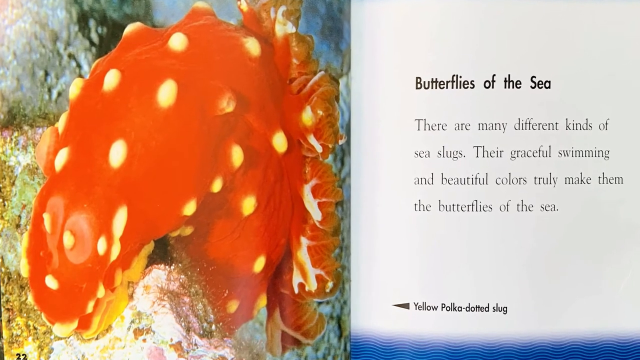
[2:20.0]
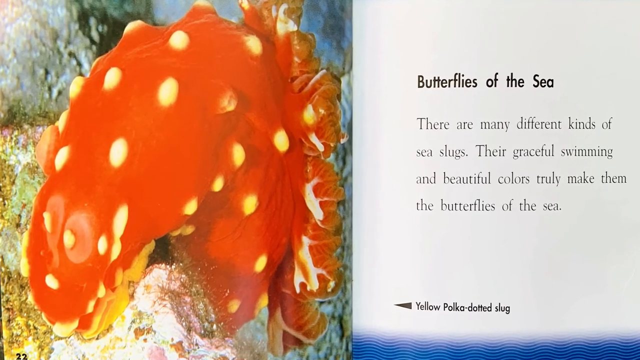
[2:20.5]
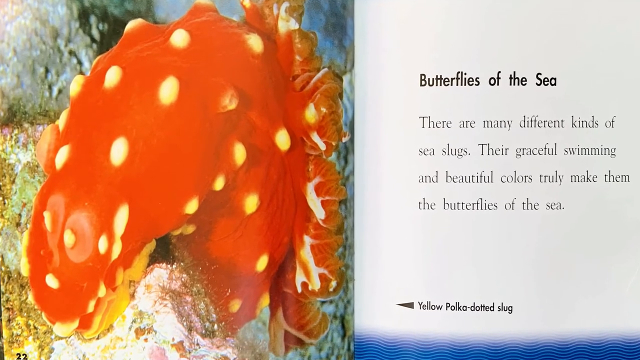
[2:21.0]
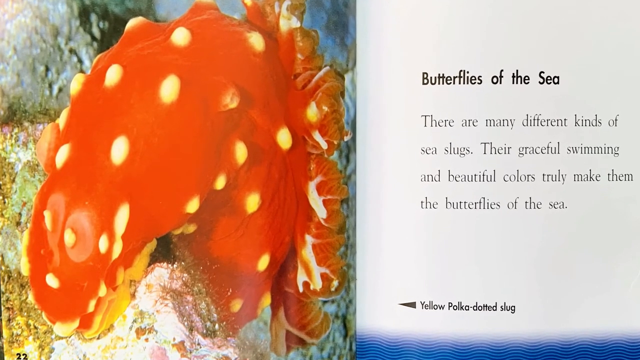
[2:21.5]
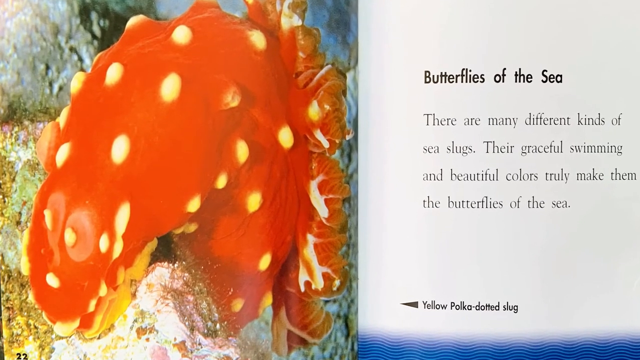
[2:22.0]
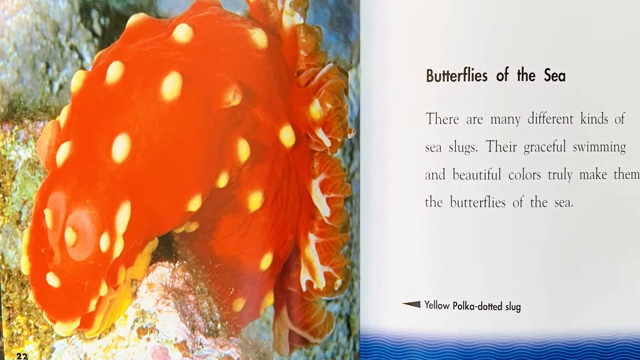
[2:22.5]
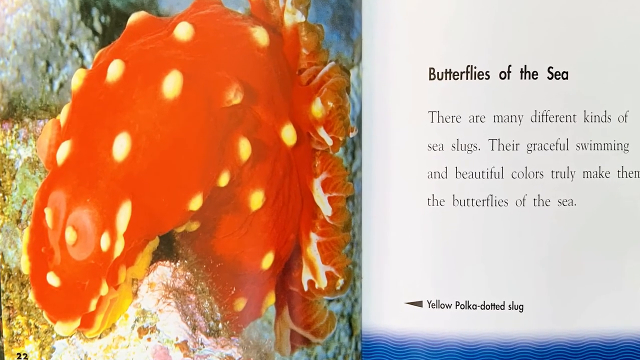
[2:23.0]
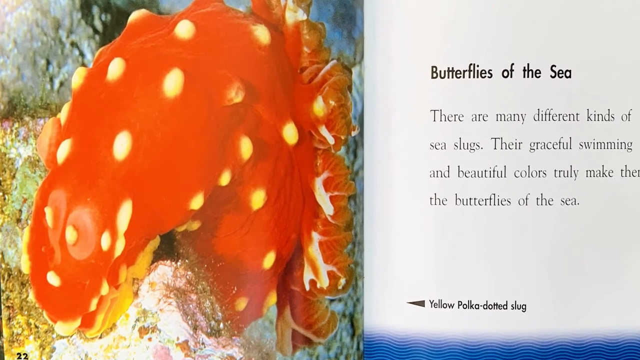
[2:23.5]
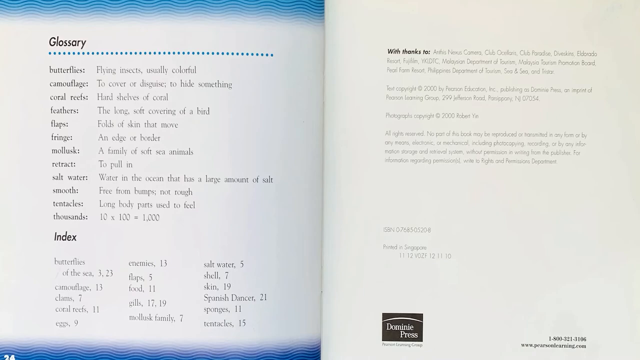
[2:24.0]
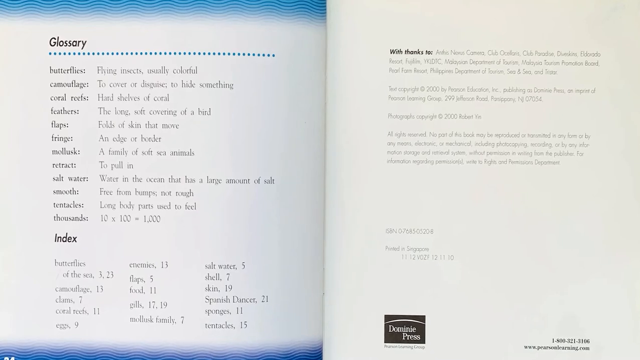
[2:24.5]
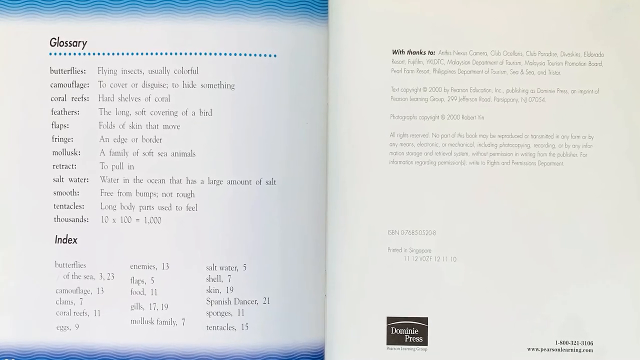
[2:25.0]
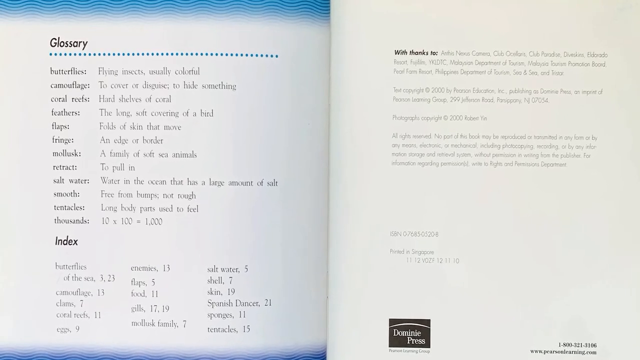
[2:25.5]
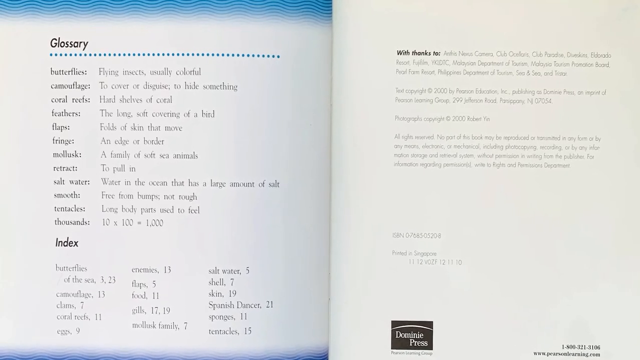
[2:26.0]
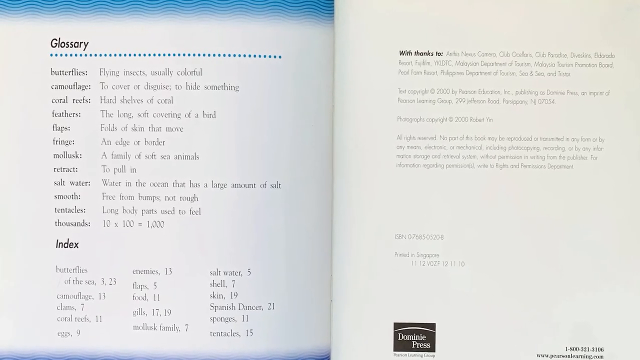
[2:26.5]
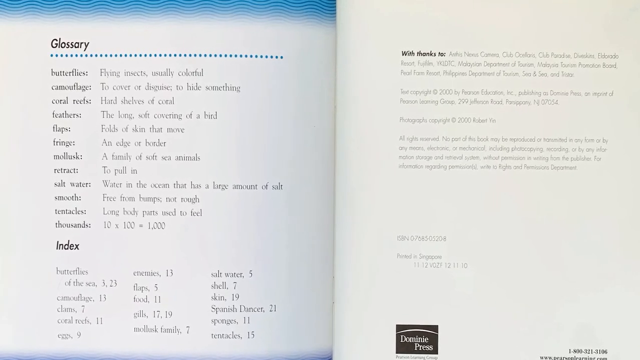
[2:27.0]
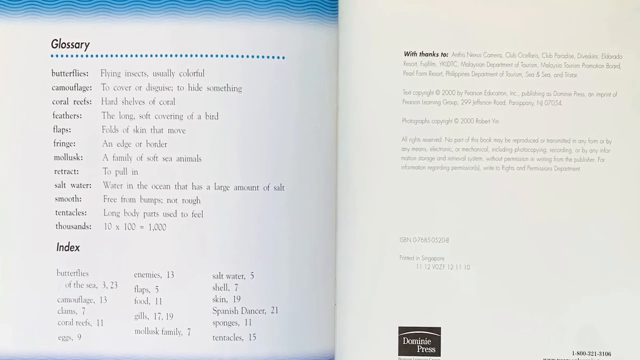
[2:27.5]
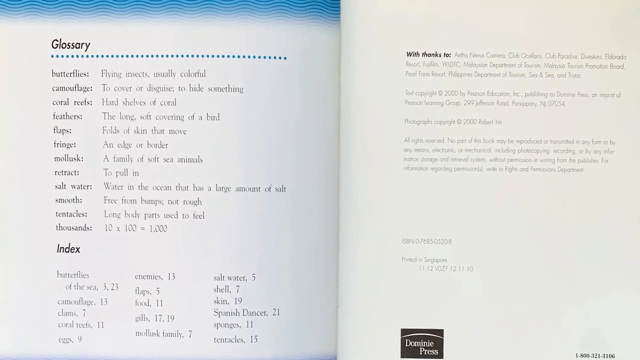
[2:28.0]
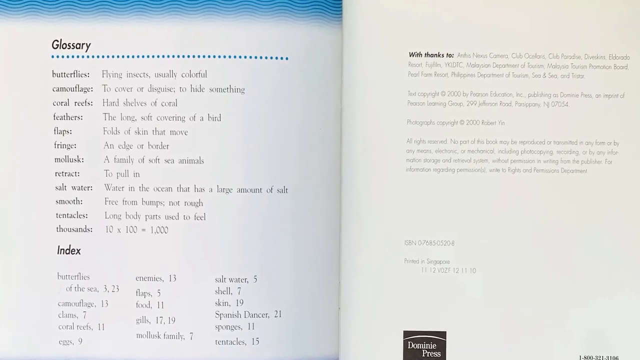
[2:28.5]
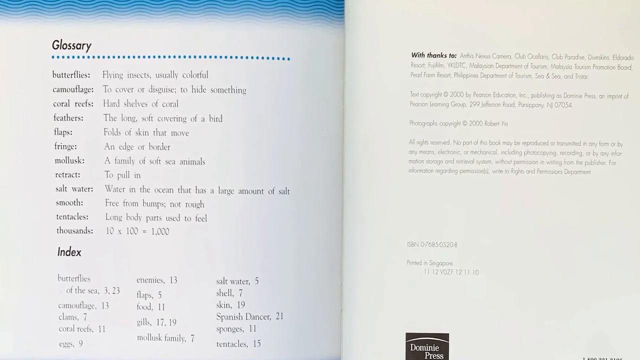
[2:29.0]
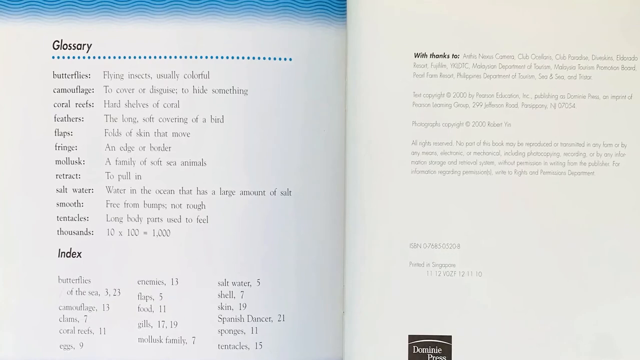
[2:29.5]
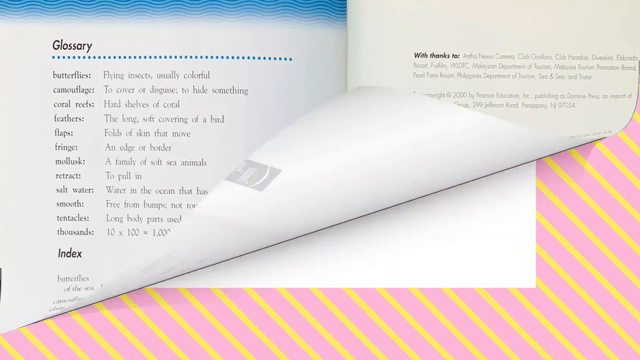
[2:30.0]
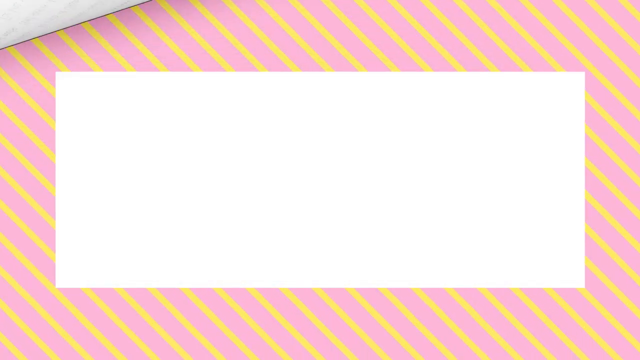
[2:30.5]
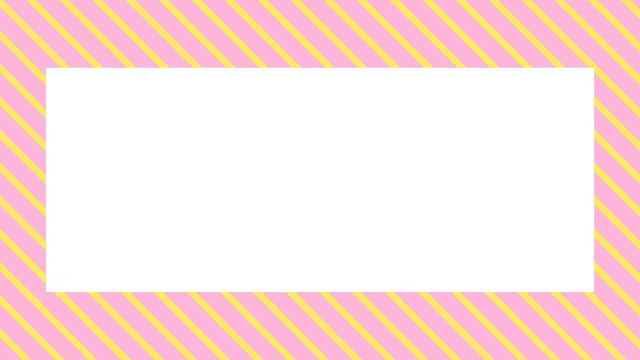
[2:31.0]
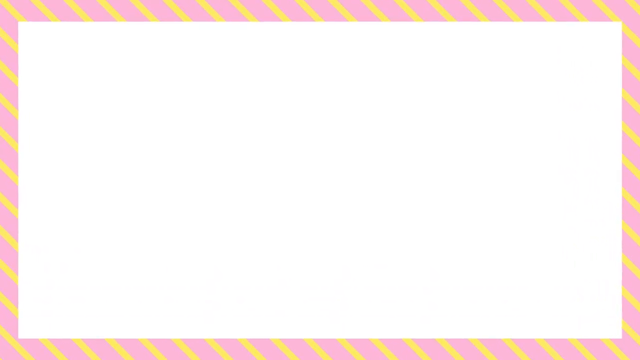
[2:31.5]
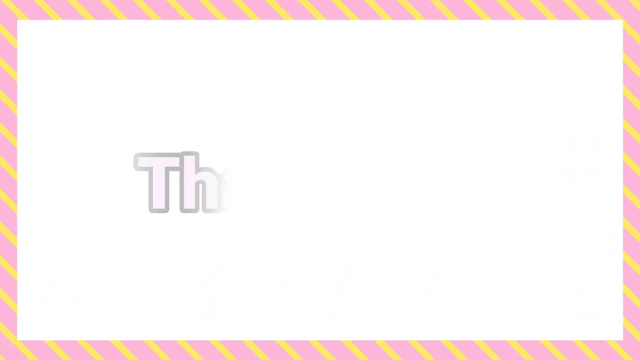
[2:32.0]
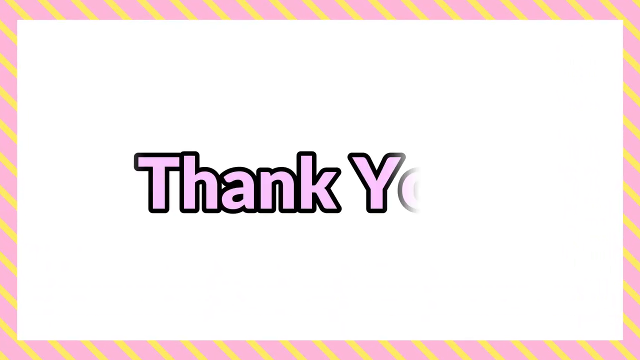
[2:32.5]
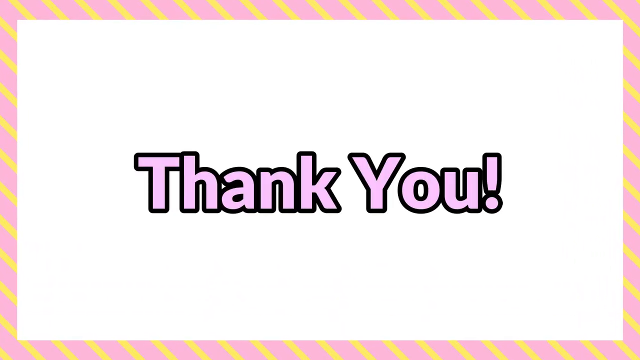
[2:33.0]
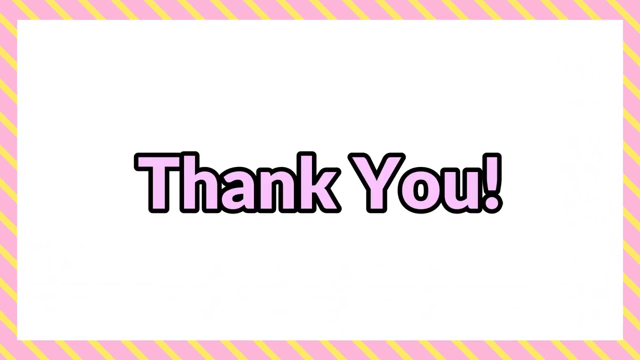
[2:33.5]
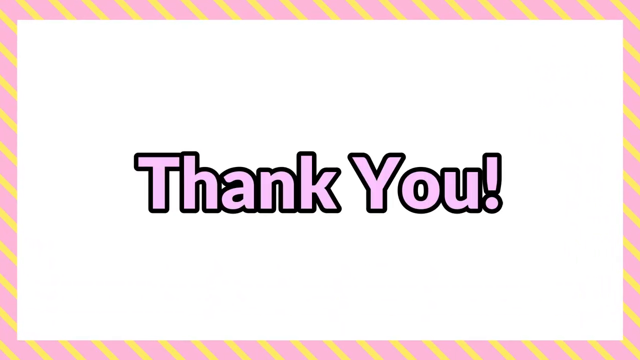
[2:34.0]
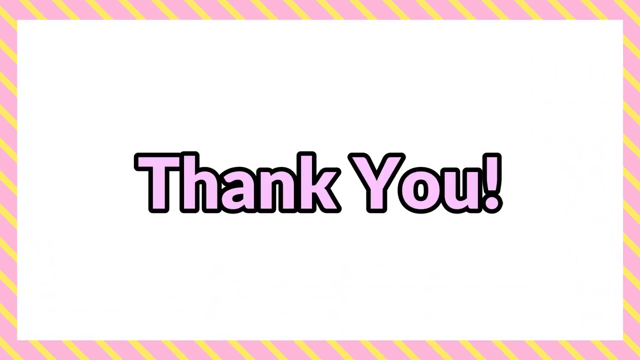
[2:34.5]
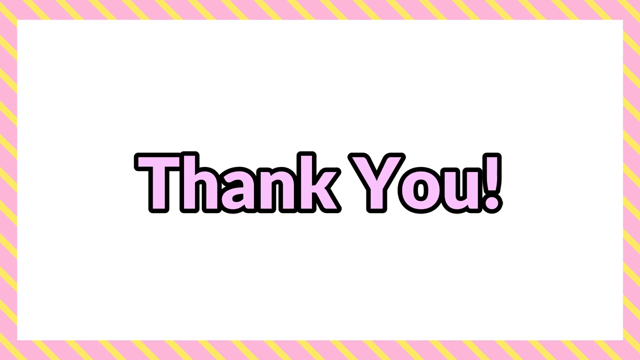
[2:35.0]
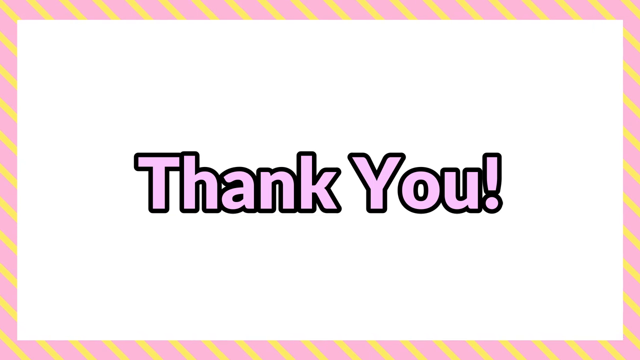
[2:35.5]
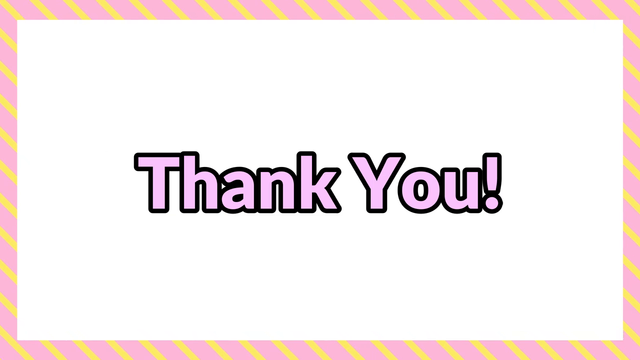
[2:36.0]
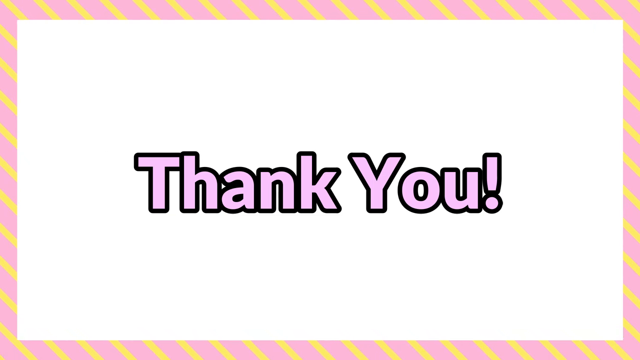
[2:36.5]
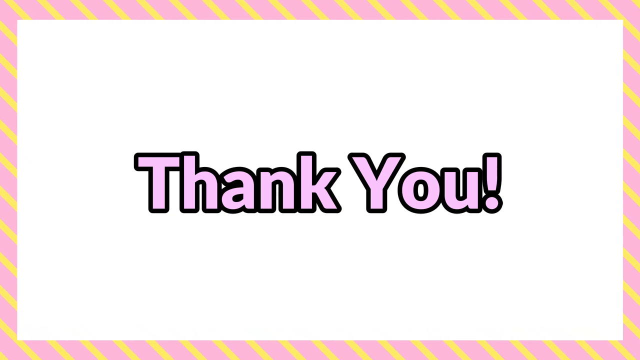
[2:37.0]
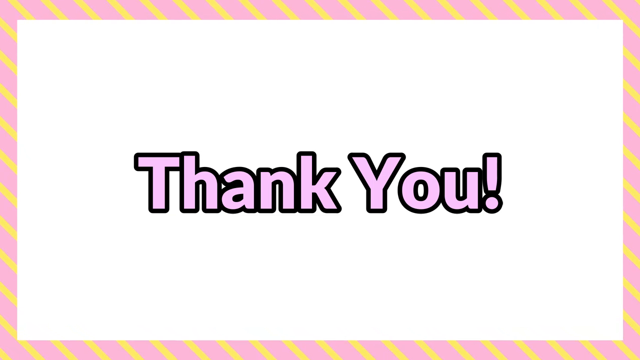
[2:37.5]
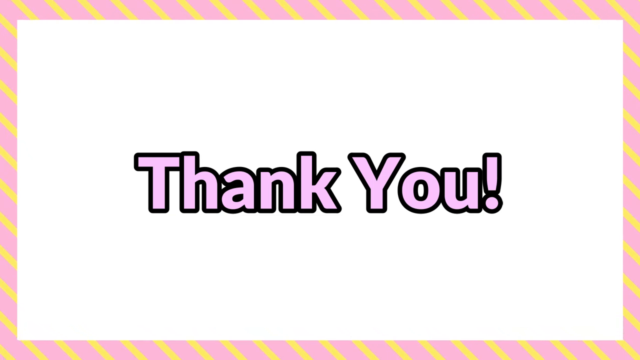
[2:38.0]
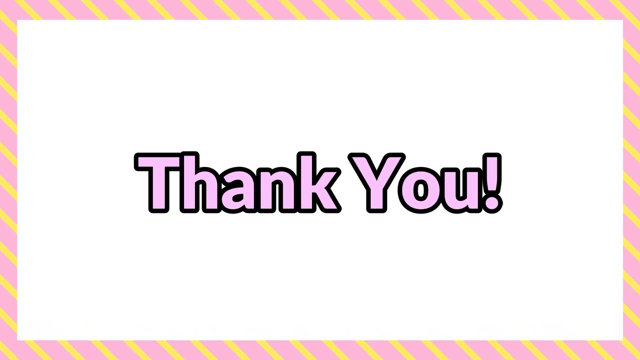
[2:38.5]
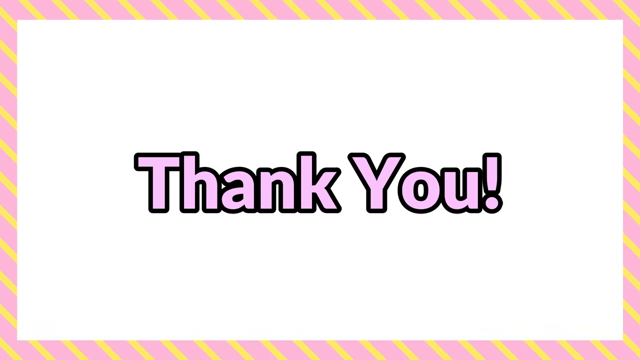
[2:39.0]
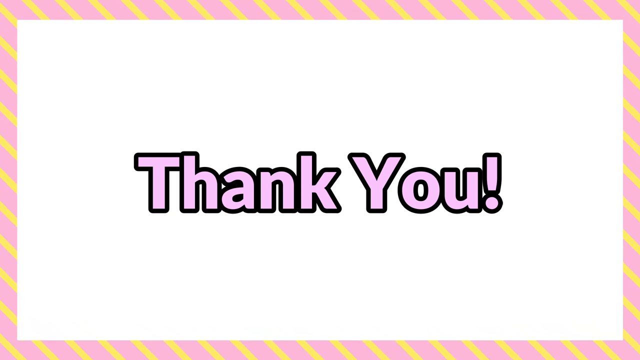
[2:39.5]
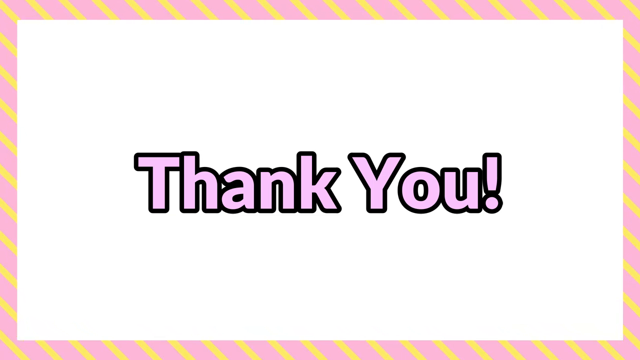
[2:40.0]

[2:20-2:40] What looks like an open book shows, on the left page, a close-up image of a large, bright red, round slug with small light yellow raised bumps all over its body, appearing somewhat slumped over tan and light brown coral at the bottom of the ocean. On the right, a white page has the bold black heading "butterflies of the sea" near the top, with a paragraph beneath in less bold black text reading "there are many different kinds of sea slugs. Their graceful swimming and beautiful colors truly make them the butterflies of the sea." At the bottom left, a black arrowhead faces the image on the left, next to the label "yellow polka dotted slug." The screen changes to another two-page spread. The left page has the black heading "Glossary" at the top, with a few words and their definitions beside them, including Butterflies, Camouflage, Coral Reefs, Feathers, Flaps, Fringes, Mollusks, Retract and more. Below that, another black heading reads "Index," listing a few other vocabulary words with the pages where they can be found. The right page has a heading reading "With Thanks To," followed by a few paragraphs thanking various people. The screen then changes to a white background with a light pink border striped with yellow horizontal stripes, and in the middle light pink letters read "Thank You!"